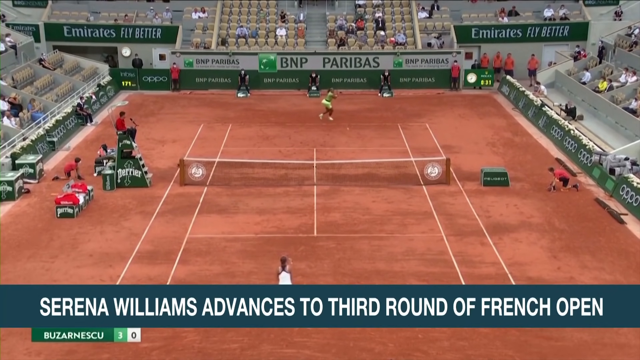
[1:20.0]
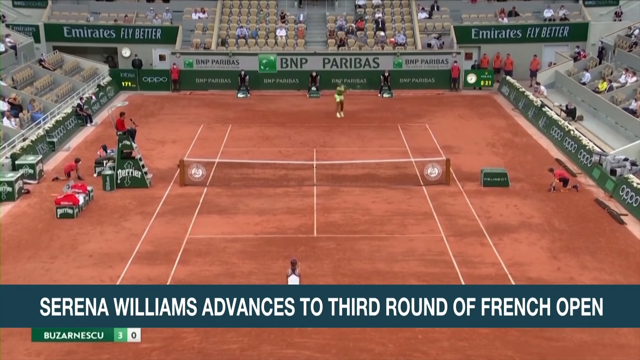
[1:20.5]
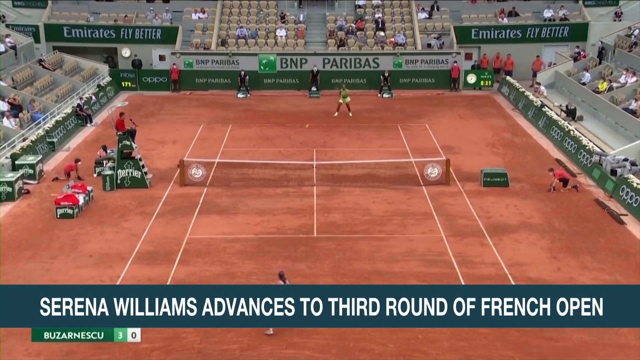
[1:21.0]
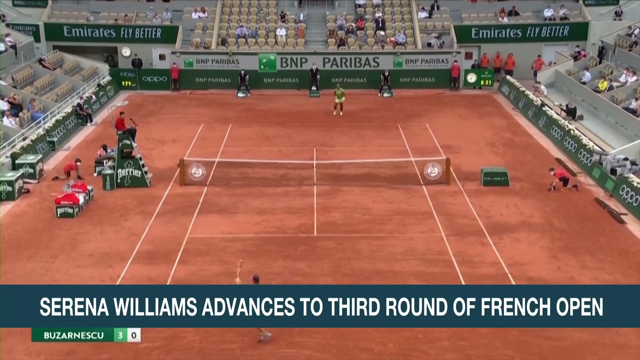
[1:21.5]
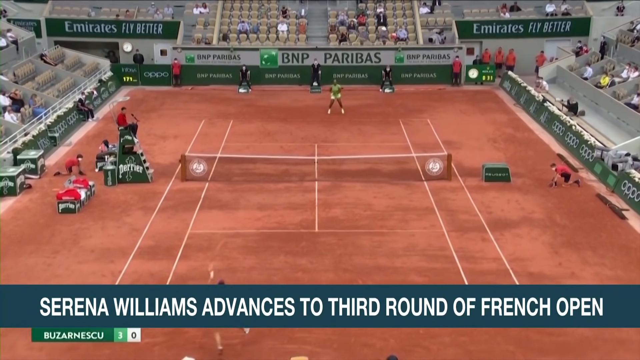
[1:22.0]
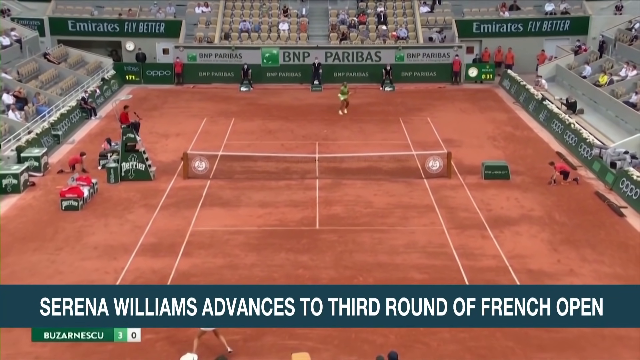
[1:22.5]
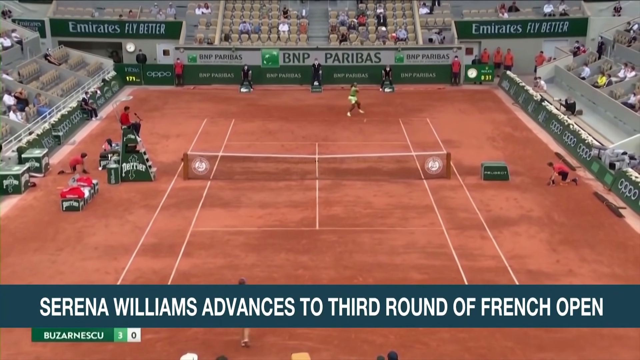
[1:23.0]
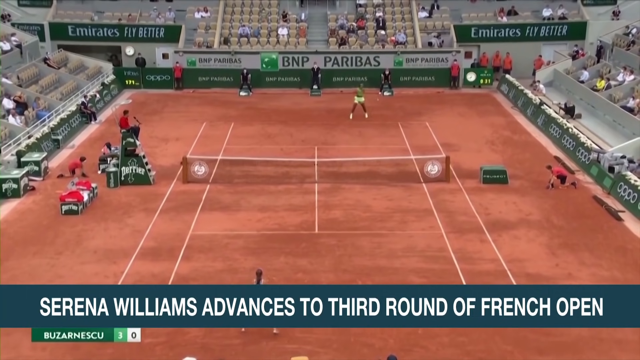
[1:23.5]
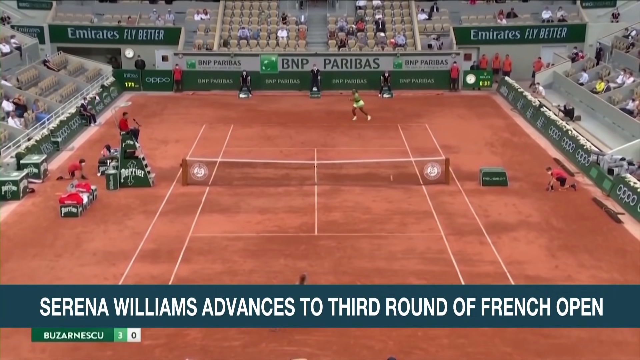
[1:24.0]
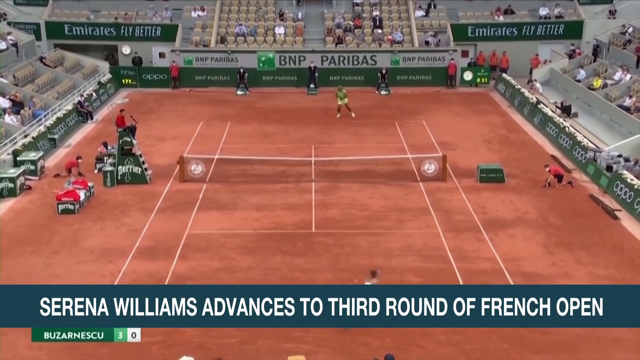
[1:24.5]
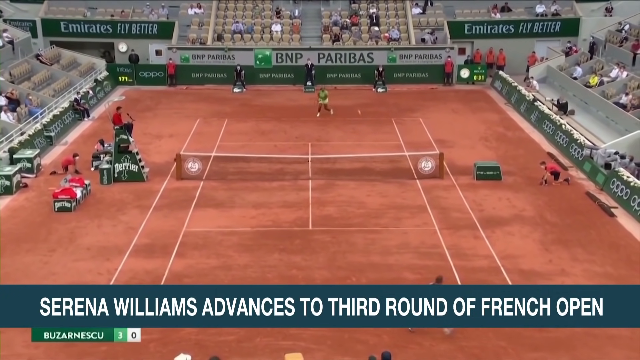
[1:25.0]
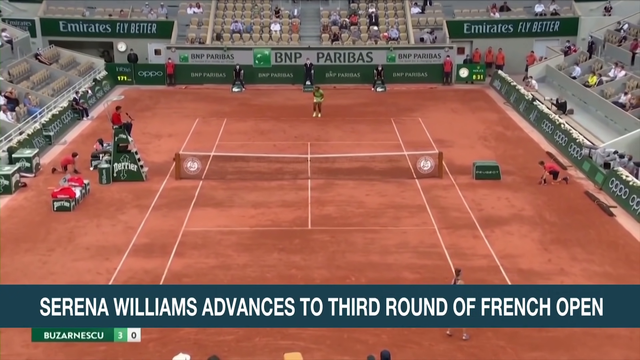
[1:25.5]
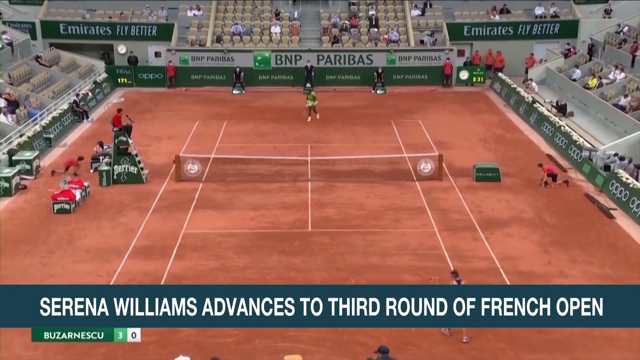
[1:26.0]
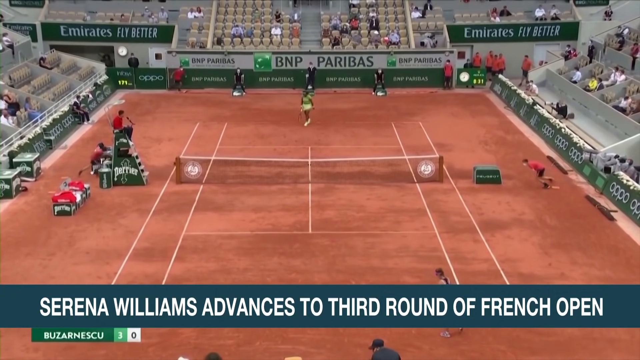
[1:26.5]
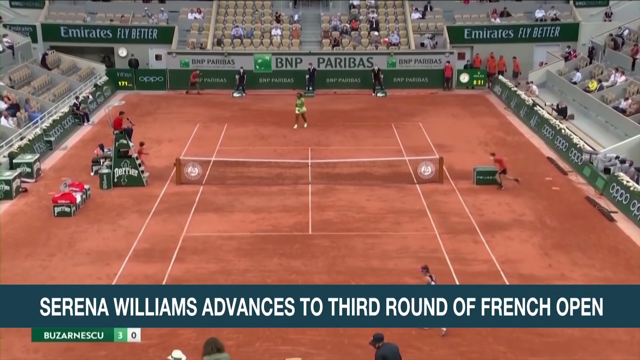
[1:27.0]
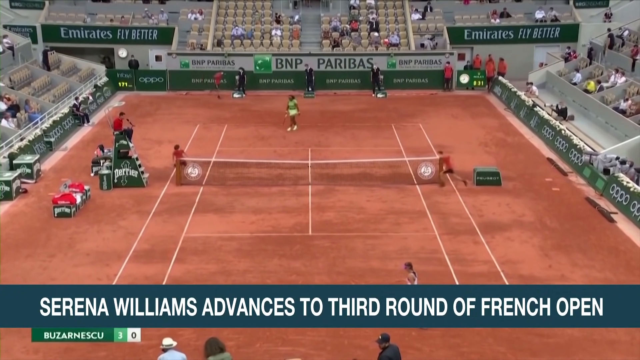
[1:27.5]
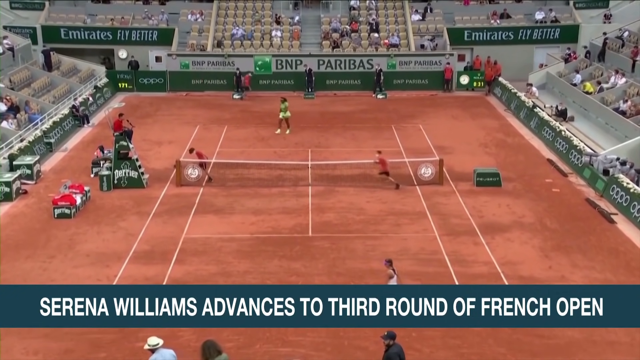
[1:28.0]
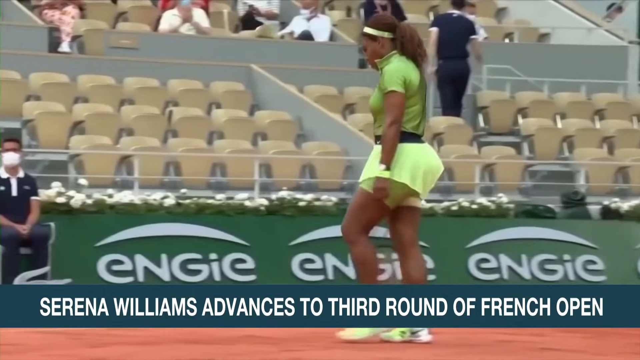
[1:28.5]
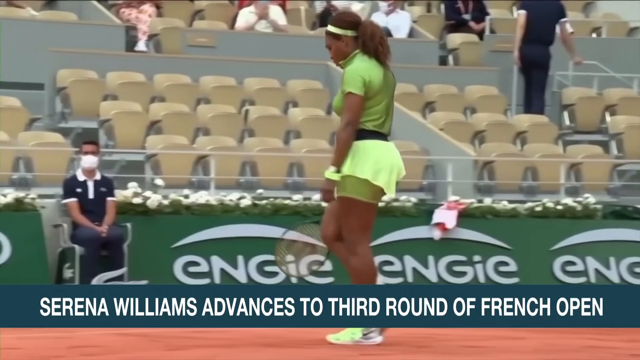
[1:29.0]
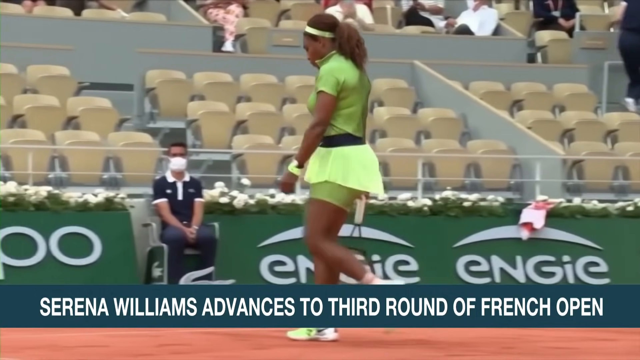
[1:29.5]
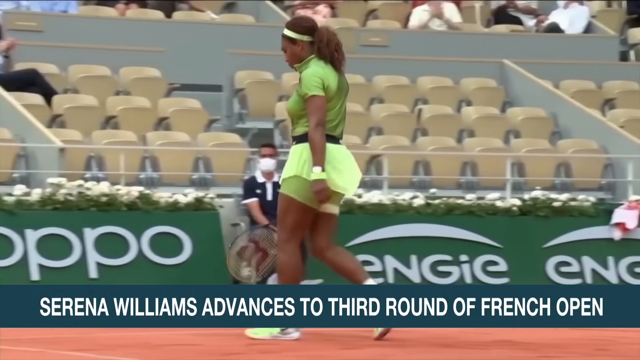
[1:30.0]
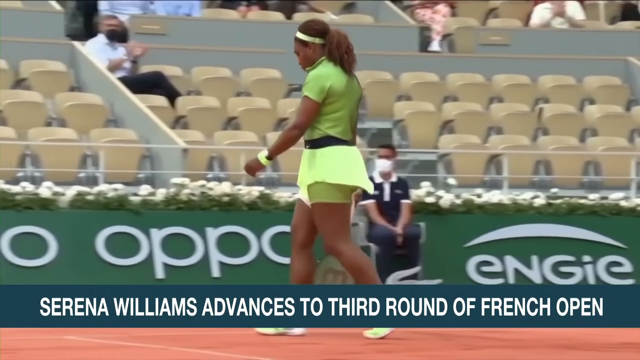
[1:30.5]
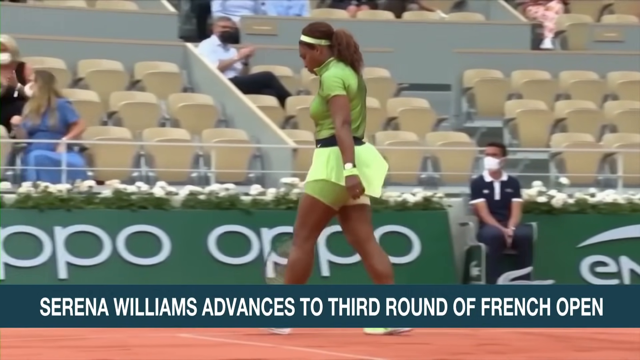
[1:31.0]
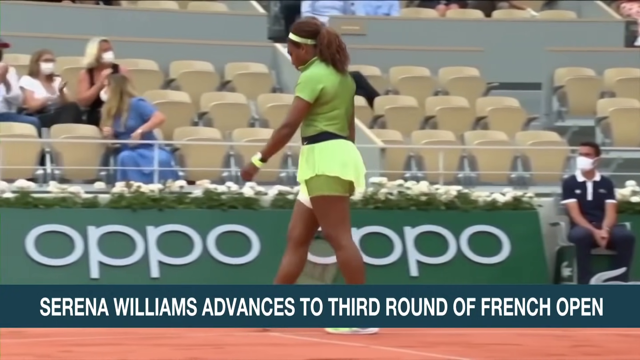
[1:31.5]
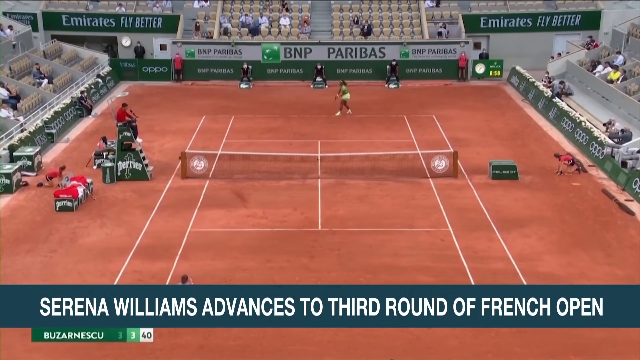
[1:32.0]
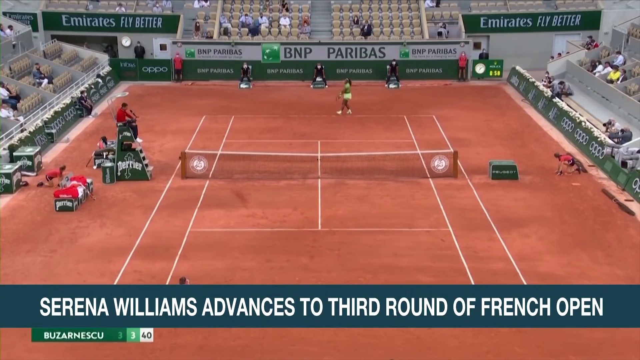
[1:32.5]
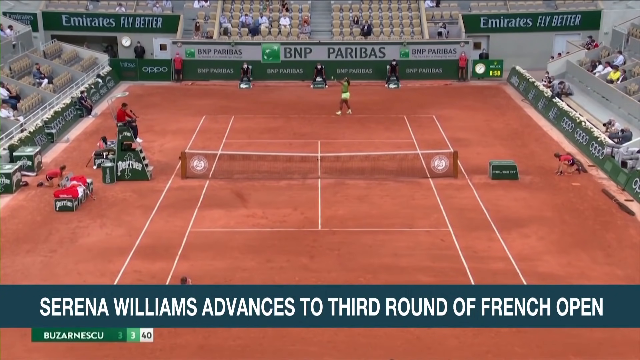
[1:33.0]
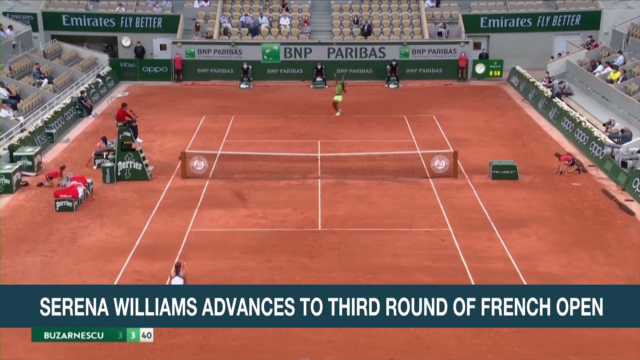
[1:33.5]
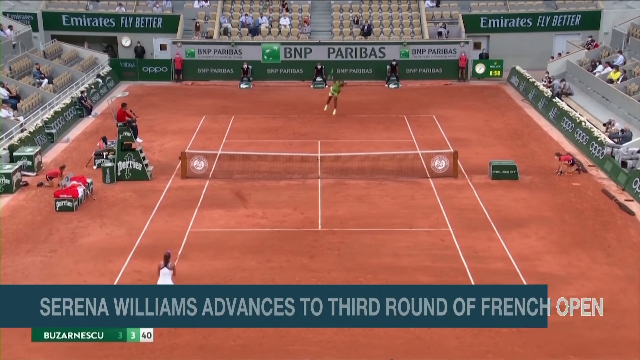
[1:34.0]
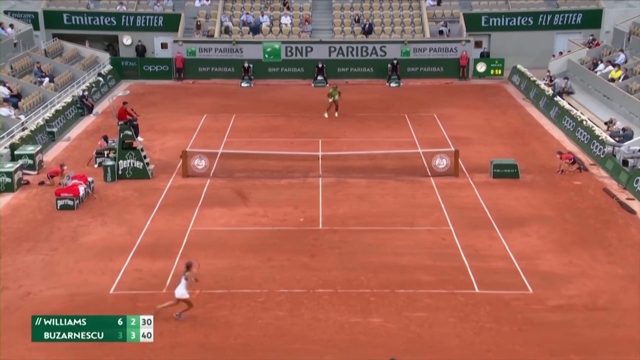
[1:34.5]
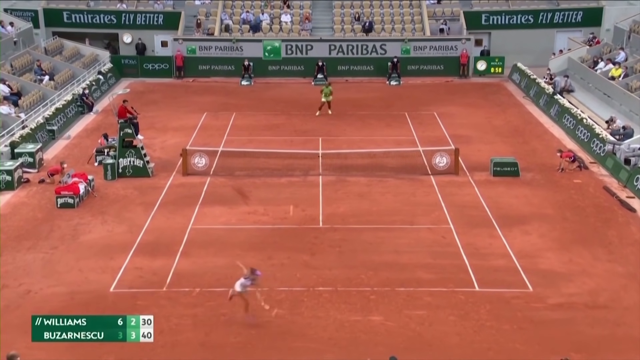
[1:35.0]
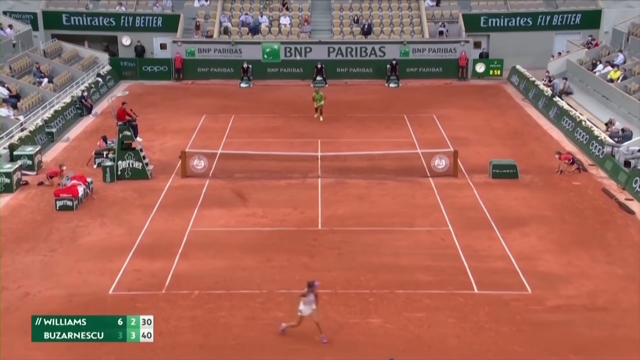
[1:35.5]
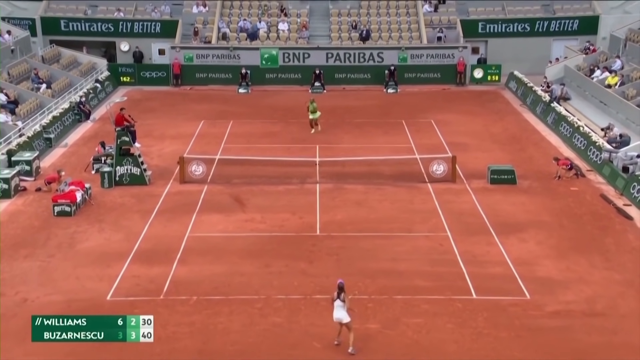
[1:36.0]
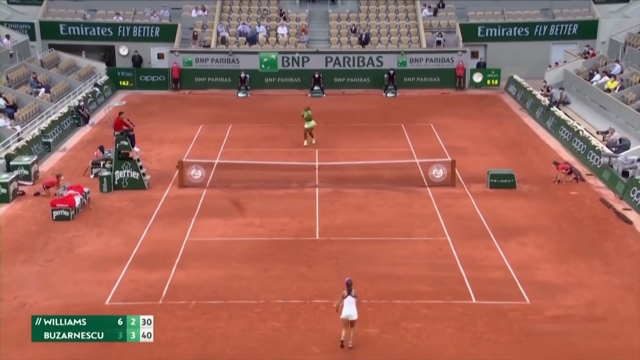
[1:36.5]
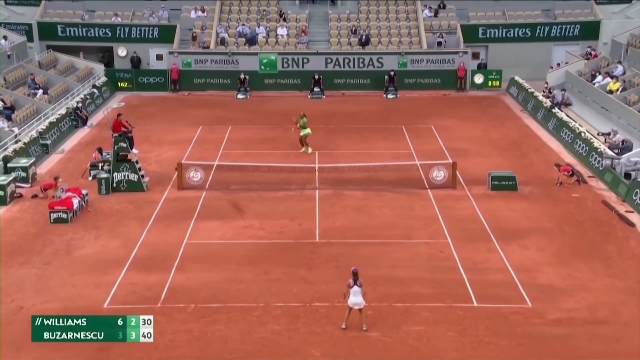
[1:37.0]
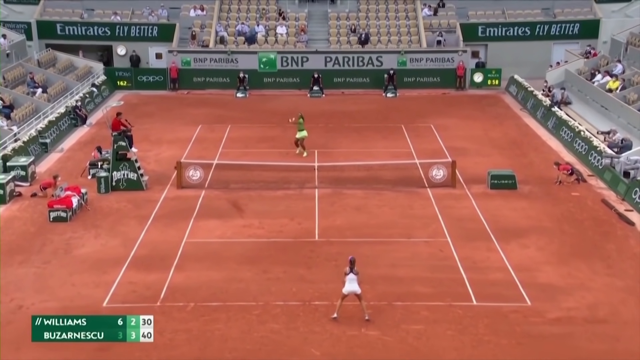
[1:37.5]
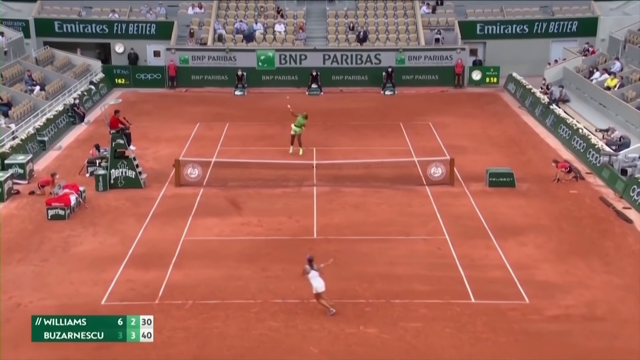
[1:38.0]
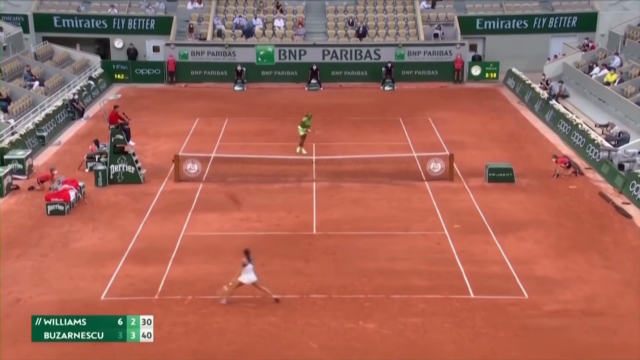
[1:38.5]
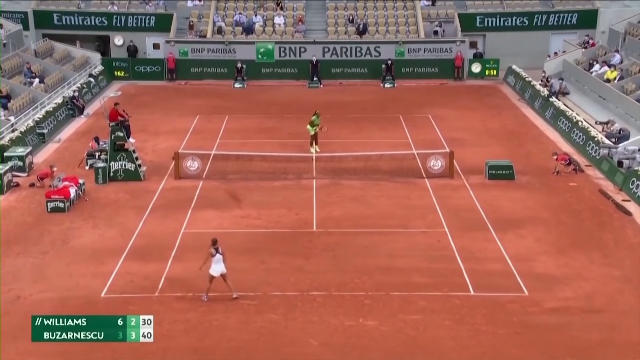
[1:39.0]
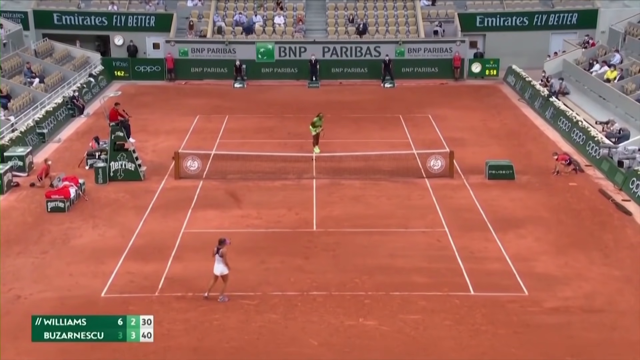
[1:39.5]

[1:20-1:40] Footage of a tennis match is shown on a court that appears to be reddish clay. In the background, green banners read "Emirates Fly Better," and "BNP Paribas" also appears in the background. The stands are not full, but there are some spectators. A headline at the bottom of the screen reads "Serena Williams advances to third round of French Open." Serena Williams plays an opponent; she appears to be wearing a yellow skirt, along with a green shirt and a green headband. The opponent hits the ball out of bounds behind Serena, and a close-up shows her walking after the point. She then serves, and slams the ball down on the opponent's side to win another point.